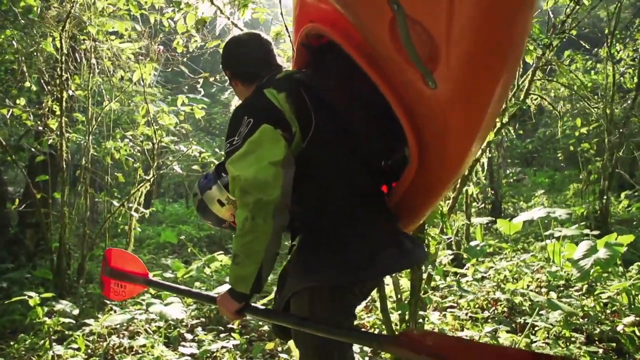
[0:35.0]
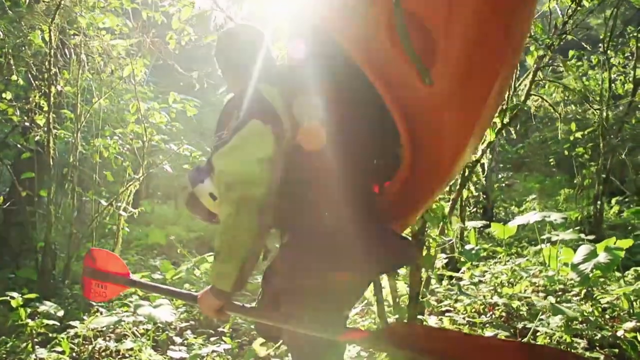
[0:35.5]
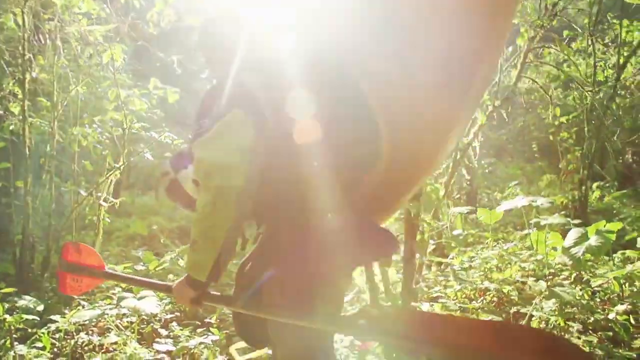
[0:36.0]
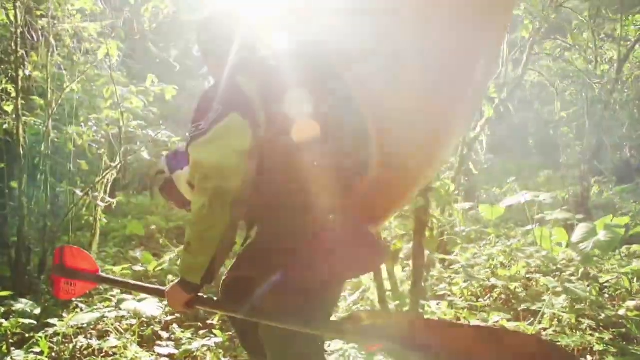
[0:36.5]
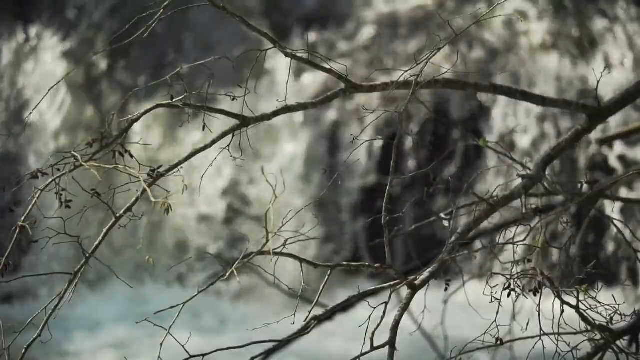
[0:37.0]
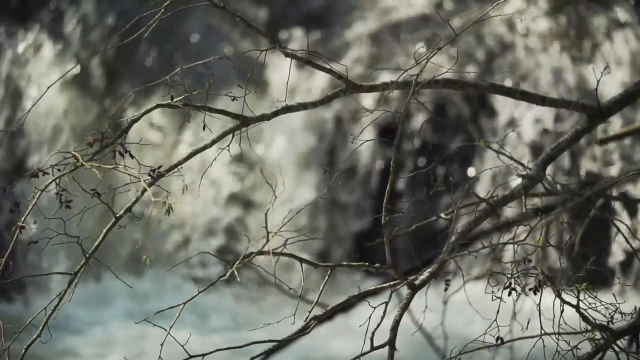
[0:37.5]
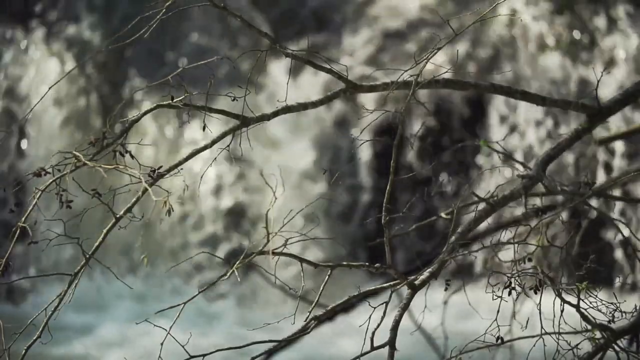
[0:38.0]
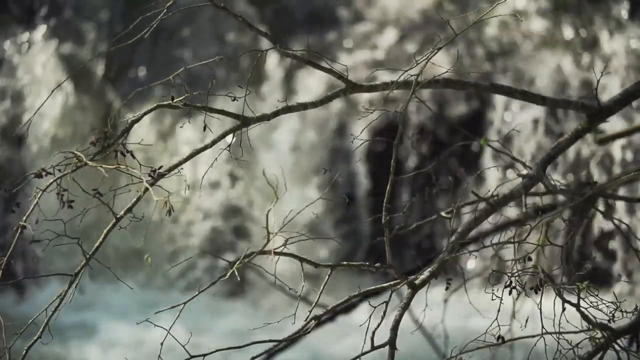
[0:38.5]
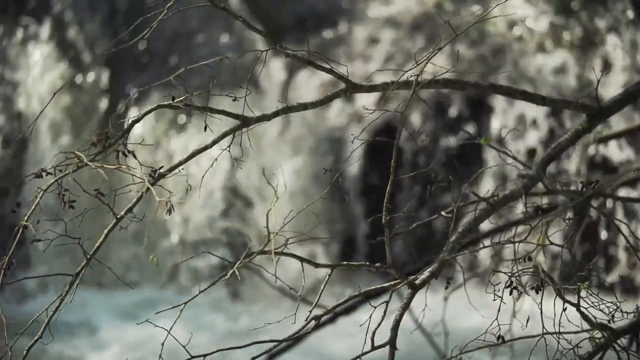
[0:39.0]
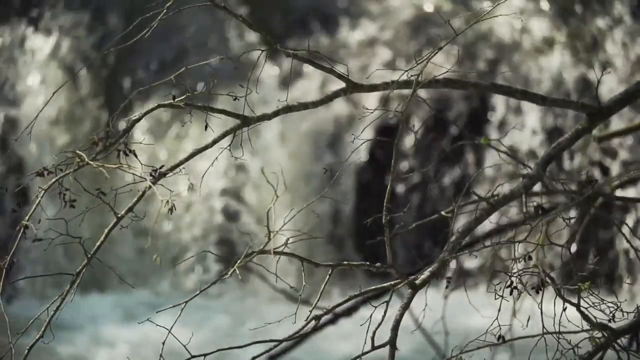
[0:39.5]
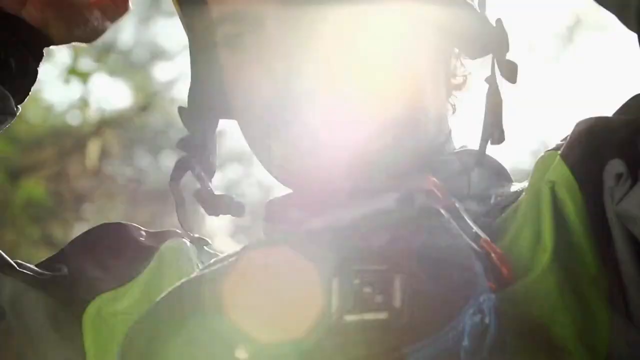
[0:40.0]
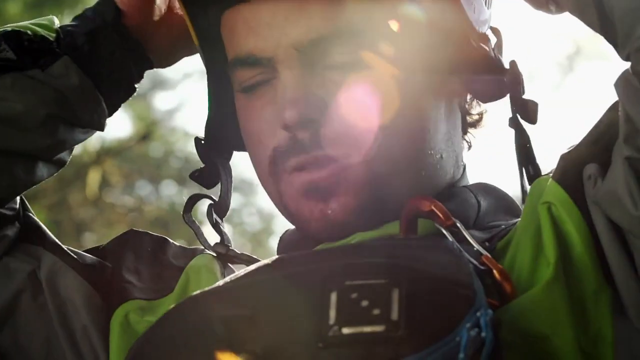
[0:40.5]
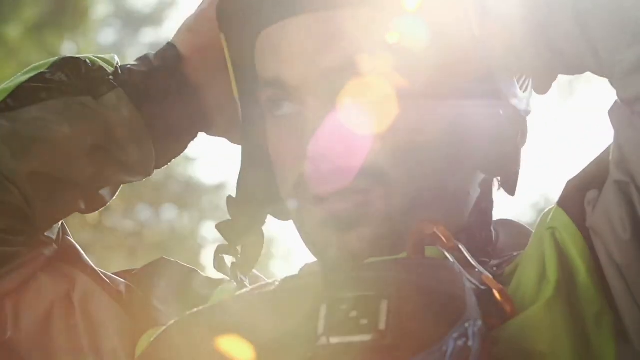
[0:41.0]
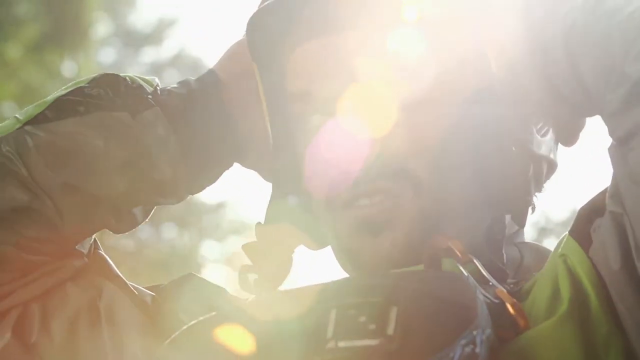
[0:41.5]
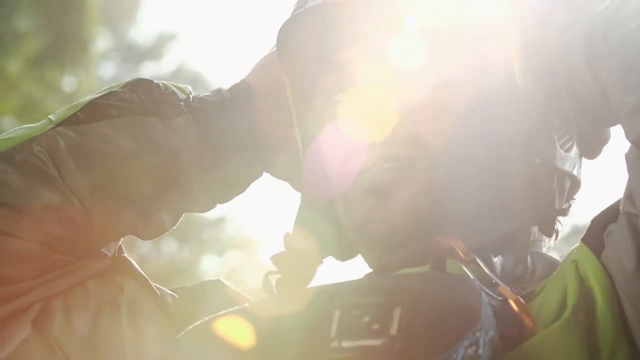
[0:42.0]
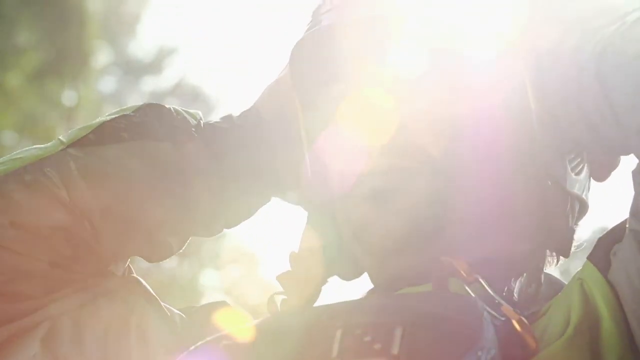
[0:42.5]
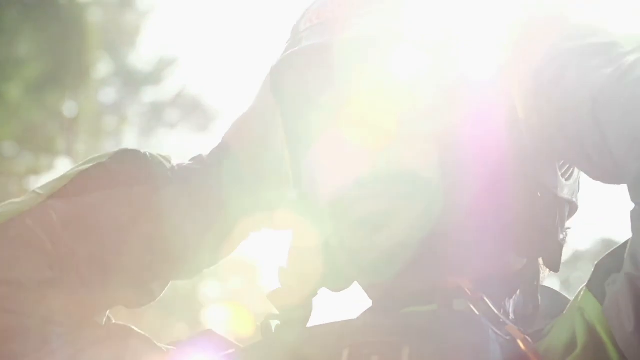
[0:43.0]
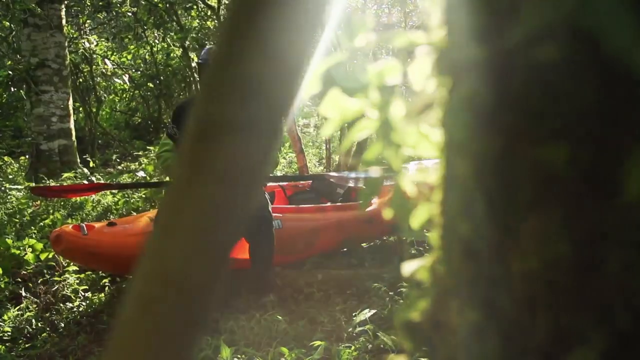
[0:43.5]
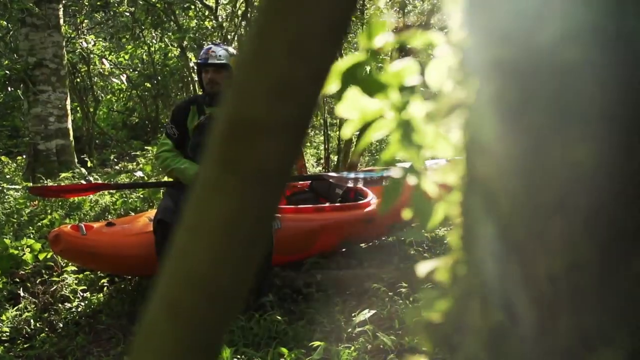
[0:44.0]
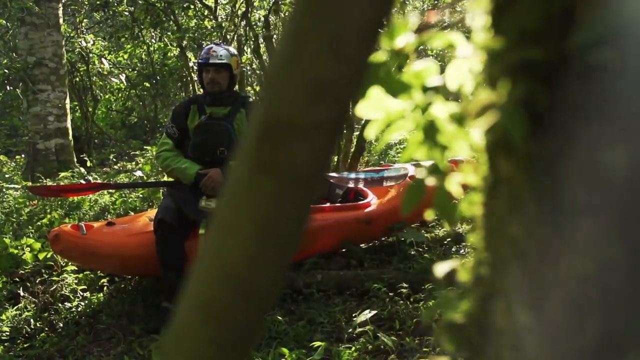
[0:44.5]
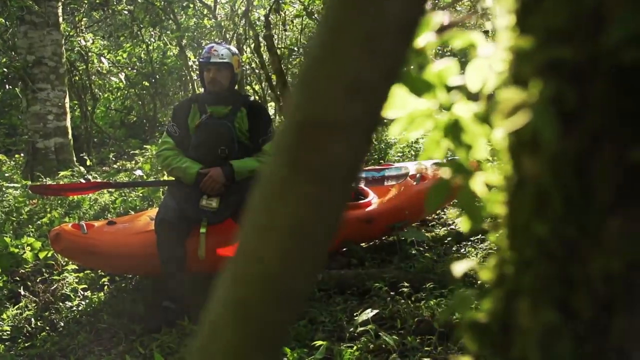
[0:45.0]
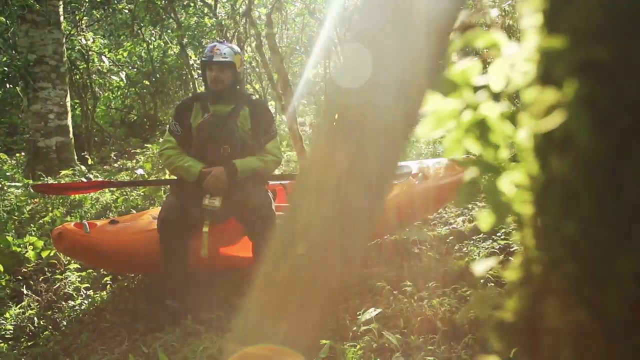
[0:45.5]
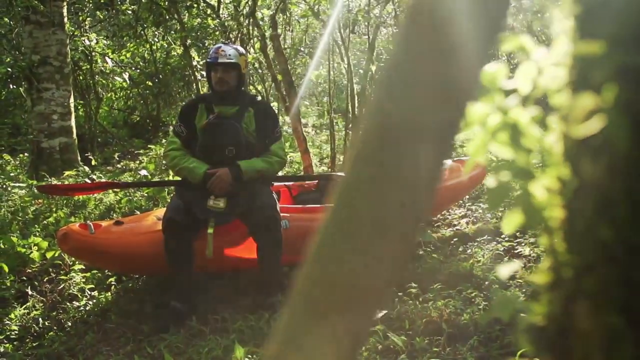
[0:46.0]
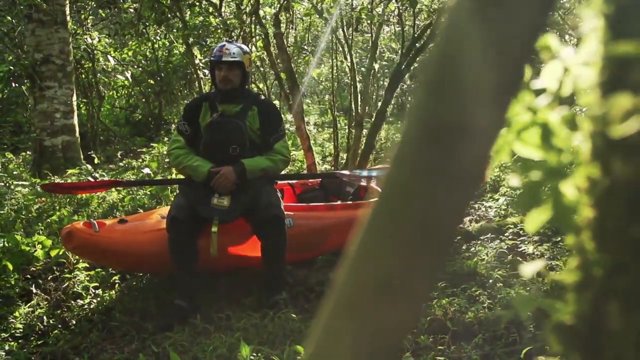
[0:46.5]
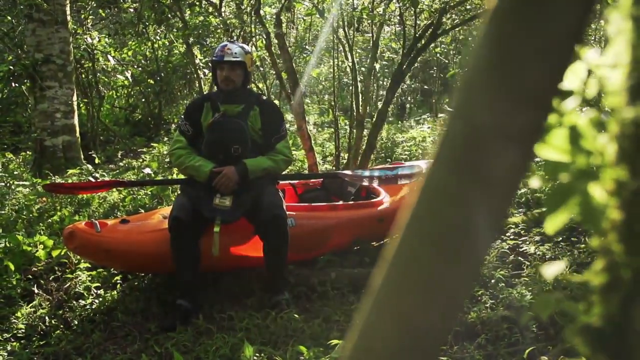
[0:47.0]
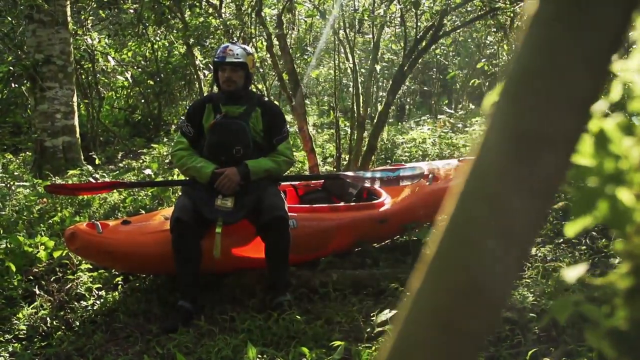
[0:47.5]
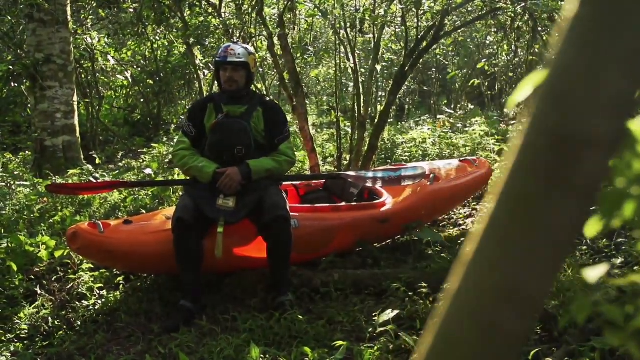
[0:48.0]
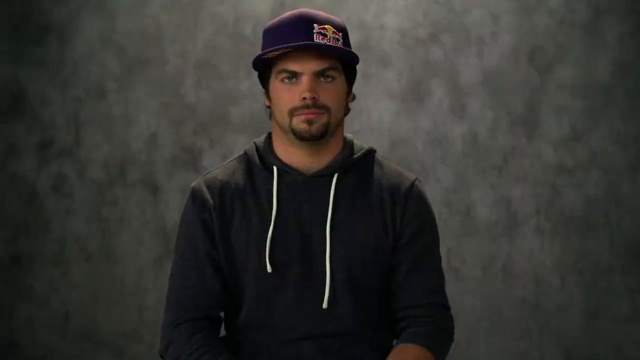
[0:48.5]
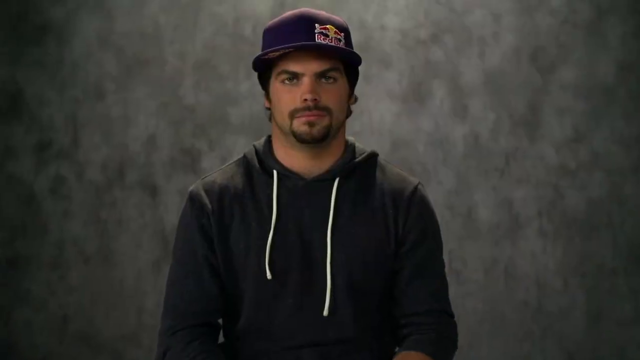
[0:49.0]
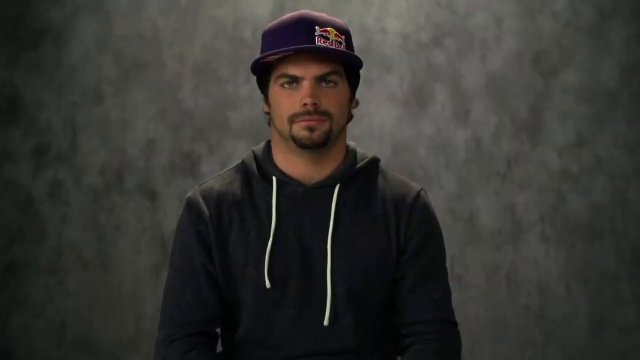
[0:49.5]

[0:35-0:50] The imagery takes place outdoors. Against bright green foliage, a man in a green and black jumpsuit carries a bright orange canoe on his shoulder, with a paddle in his other arm, as he walks through a tree line with bright sunshine coming down all around him. The scene moves to white cascading water viewed through tree branches that have no leaves. It then cuts back to the man putting on his helmet, geared up as though getting ready to go kayaking. He sits on top of the canoe with his paddle across his lap, surrounded by trees lit up by the bright sunshine. The camera kind of pans through the scene and then returns to the same man, now in a gray hoodie and a purple hat with a Red Bull logo, sitting in front of a gray wall.